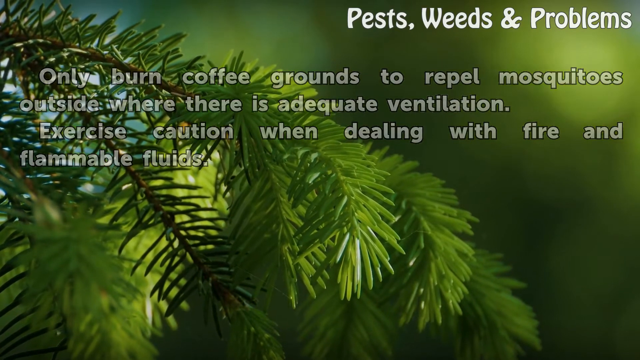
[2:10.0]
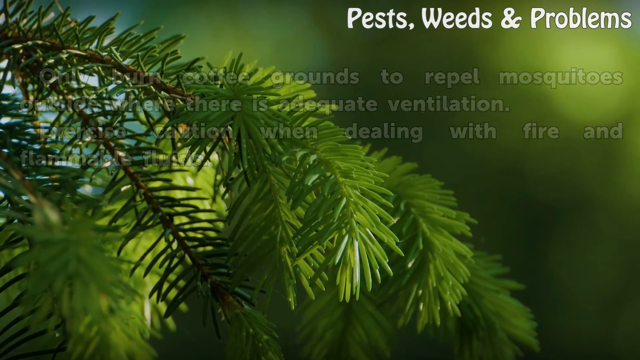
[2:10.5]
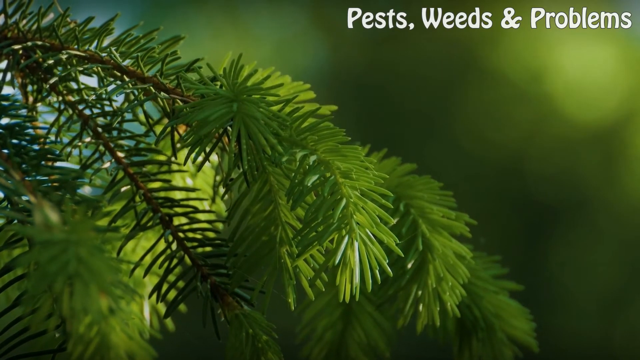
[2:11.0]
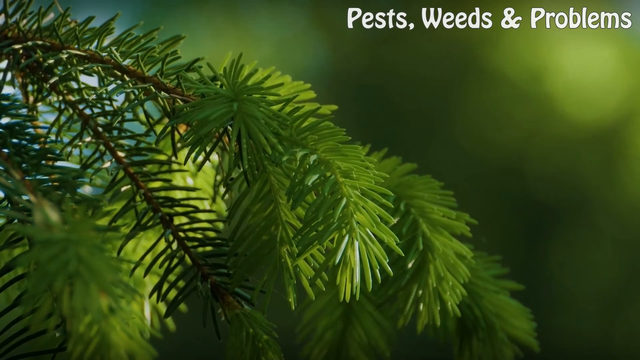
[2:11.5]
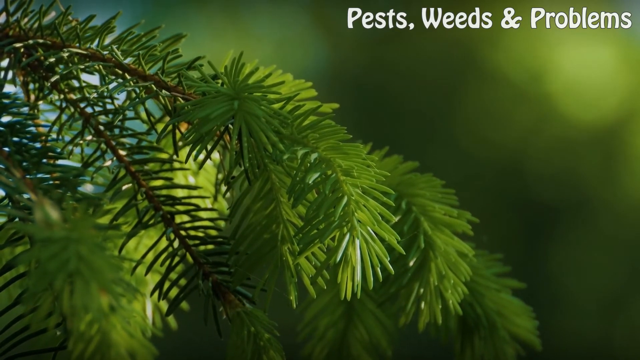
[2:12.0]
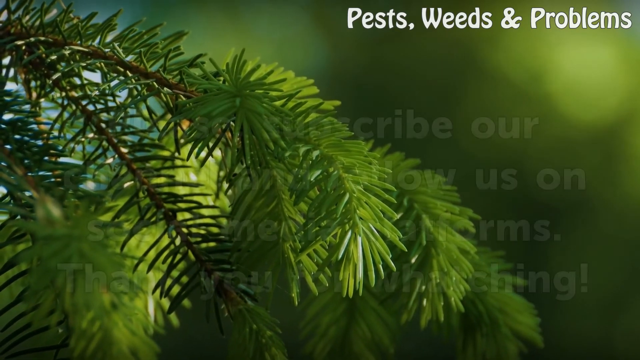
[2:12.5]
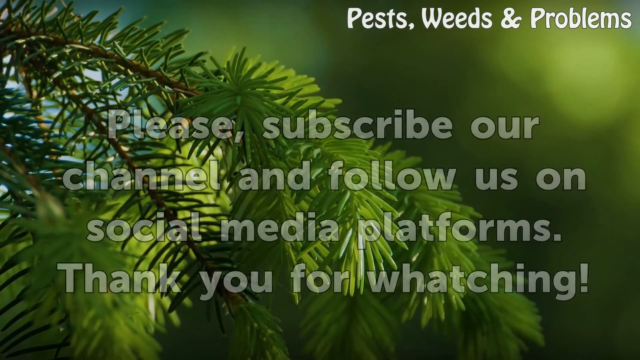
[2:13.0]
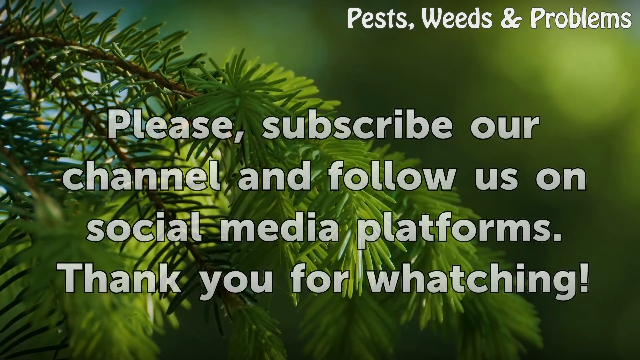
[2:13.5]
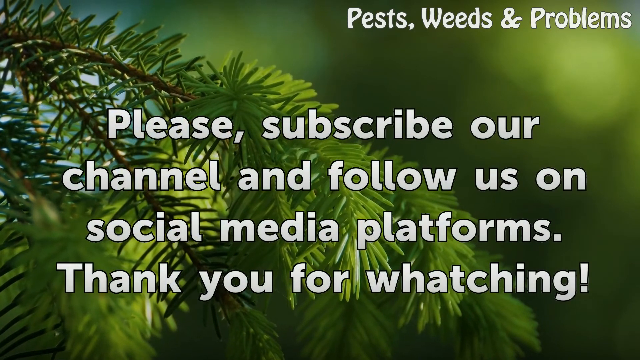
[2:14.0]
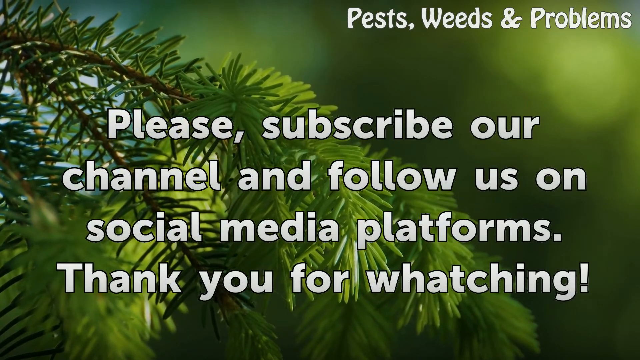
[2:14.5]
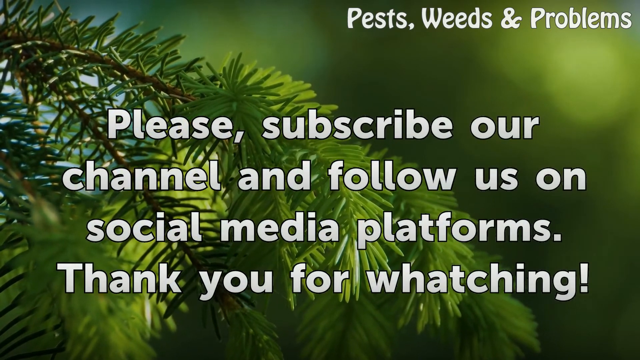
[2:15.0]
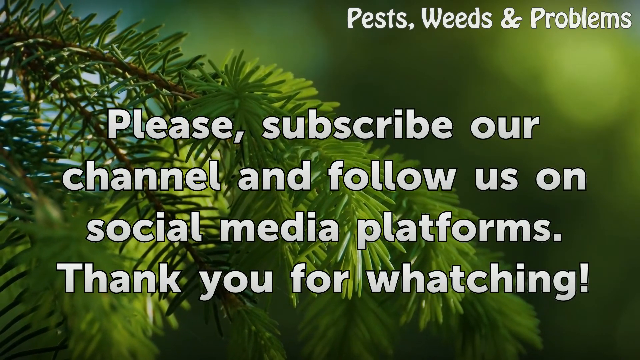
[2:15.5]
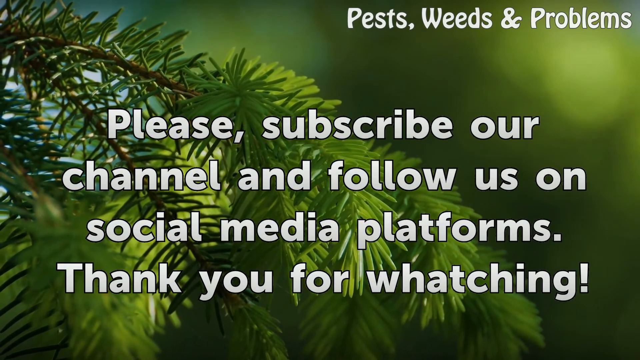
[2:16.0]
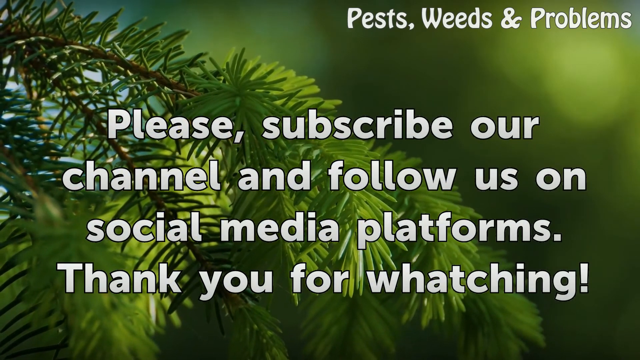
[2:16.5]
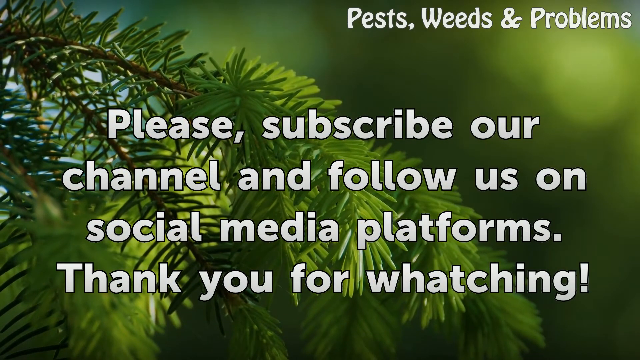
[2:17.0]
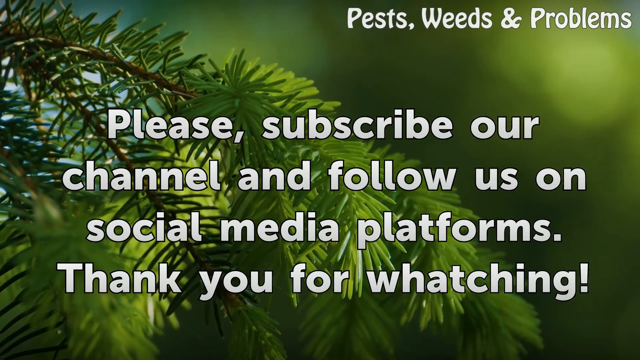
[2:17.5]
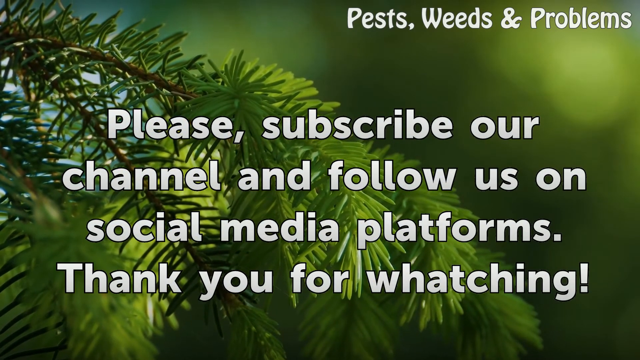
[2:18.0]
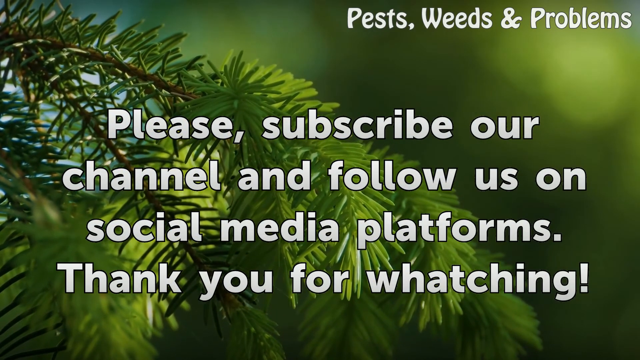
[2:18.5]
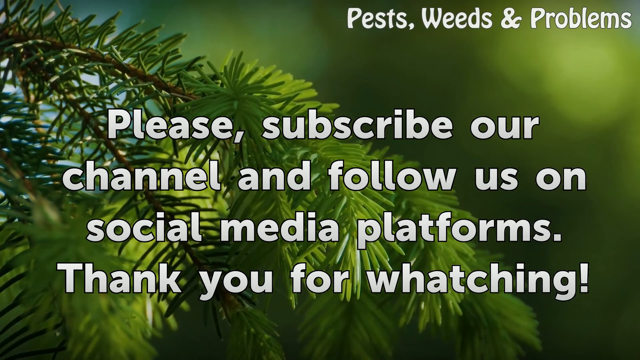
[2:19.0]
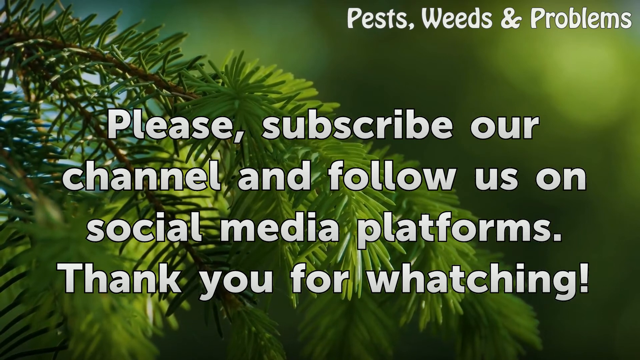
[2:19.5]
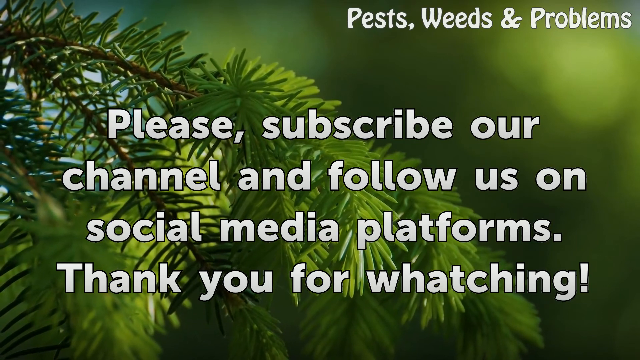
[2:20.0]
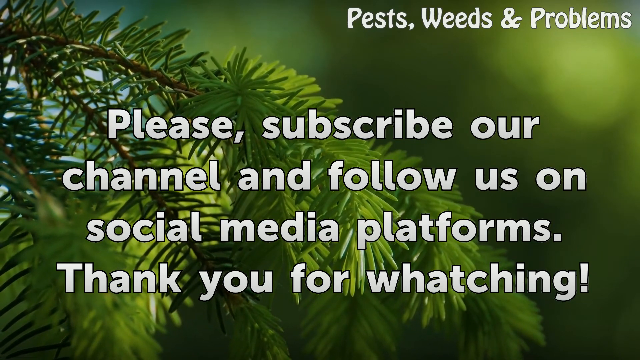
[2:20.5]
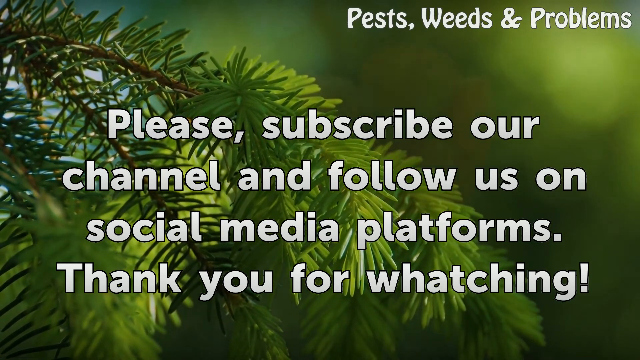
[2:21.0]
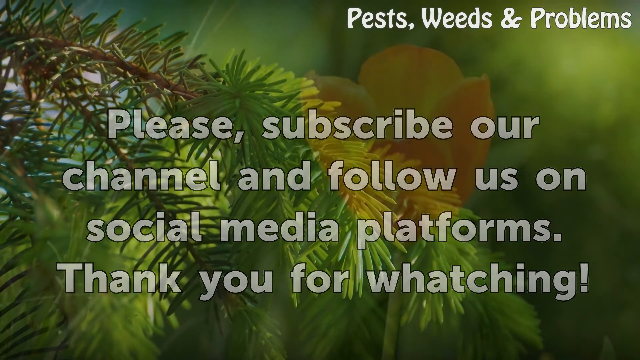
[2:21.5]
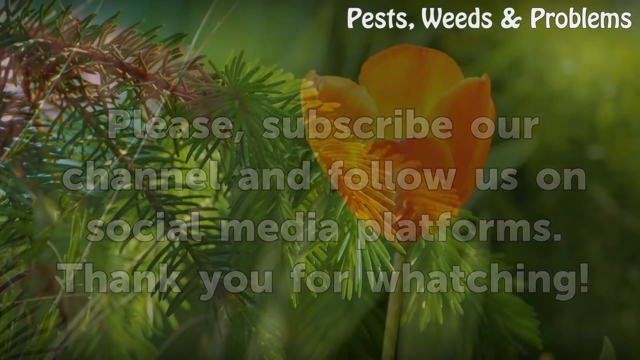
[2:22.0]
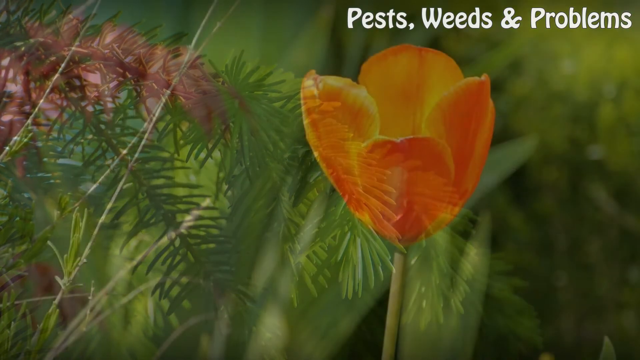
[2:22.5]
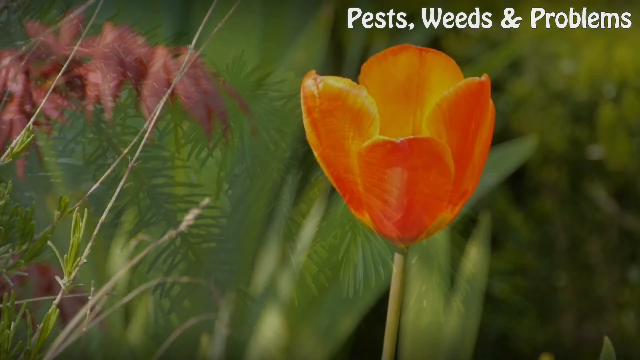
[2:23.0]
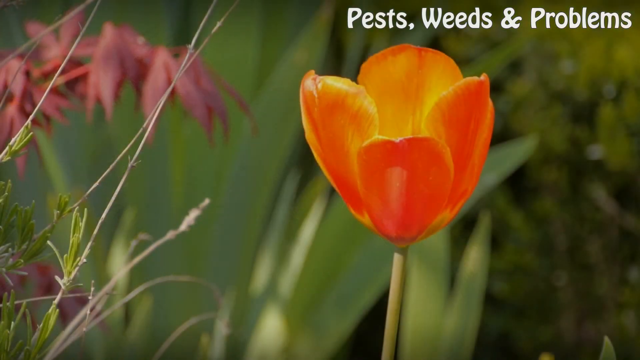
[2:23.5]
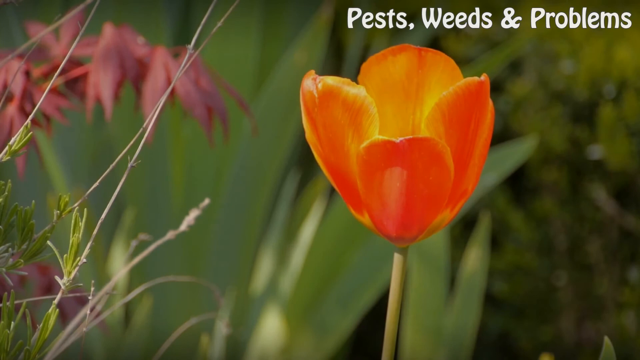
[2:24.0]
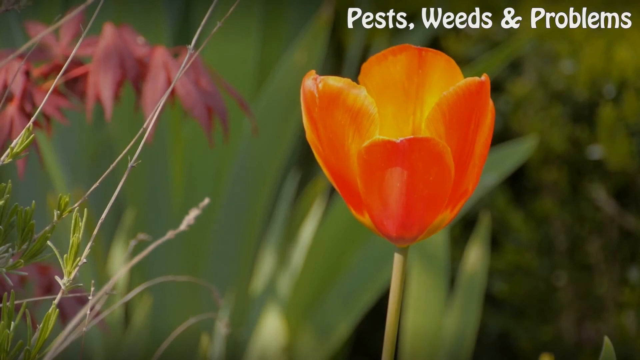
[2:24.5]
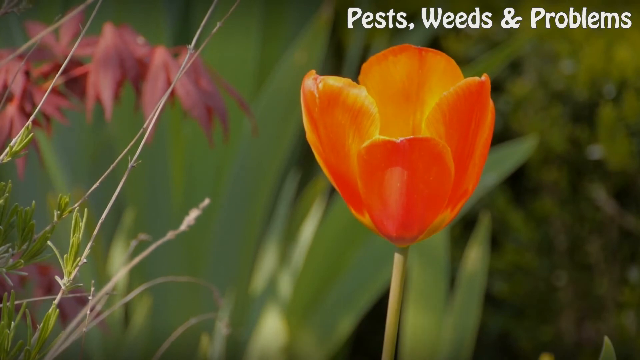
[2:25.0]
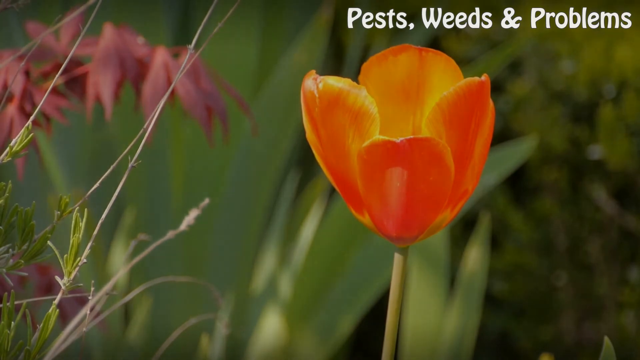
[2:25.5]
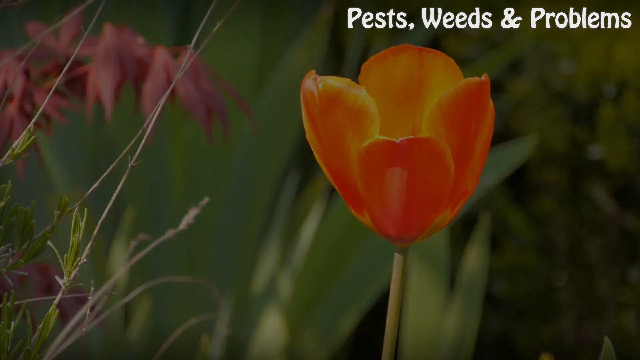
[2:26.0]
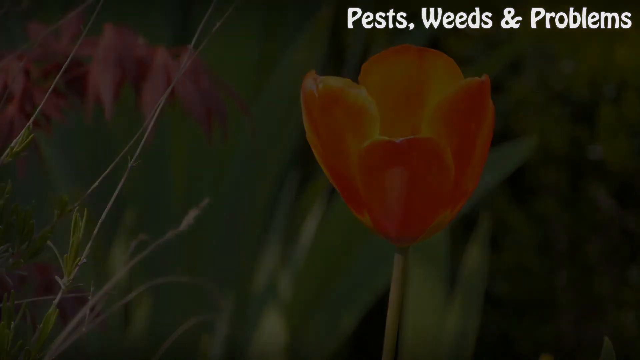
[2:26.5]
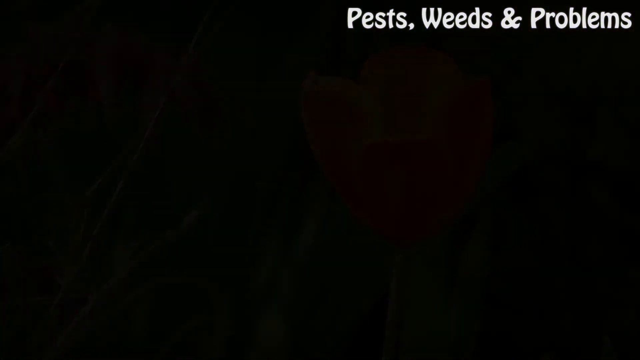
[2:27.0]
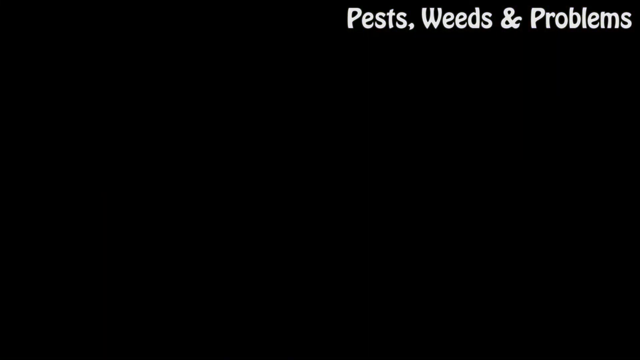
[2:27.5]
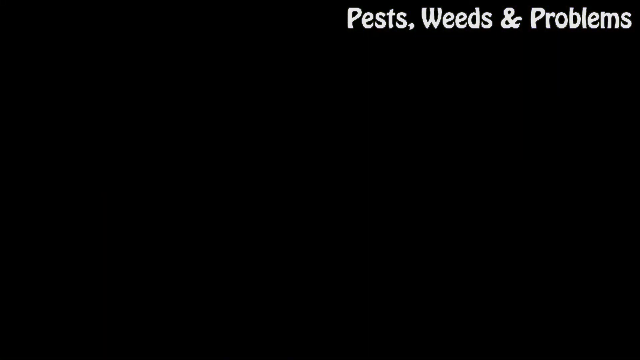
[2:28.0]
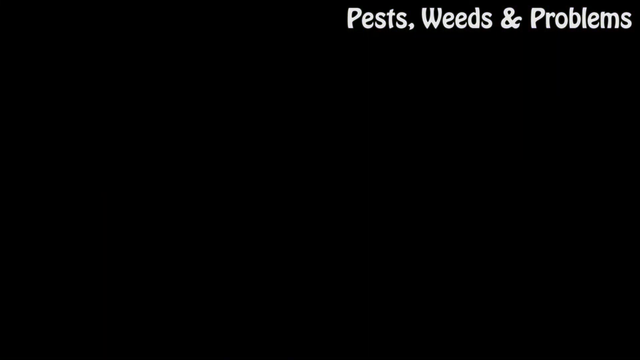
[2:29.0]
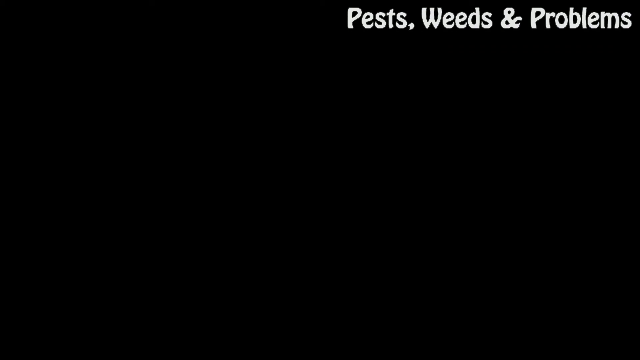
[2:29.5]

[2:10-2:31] The white text fades away, leaving the image of the pine tree, which looks like a close-up of a Christmas tree: a thin brown center with green needles coming out of the branches and twigs. White text reads "please subscribe our channel and follow us on social media platforms. Thank you for watching," with the word "watching" misspelled, other grammar errors in the sentence, and an exclamation point at the end. The image and text fade away, and an orange flower appears that looks kind of like a poppy, maybe a tulip. Its outside is a darker orange and its inside a yellowish orange. It is a single flower on the end of its stem. Then that photo fades away.